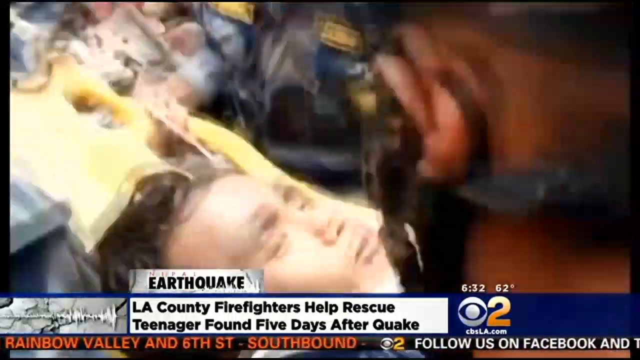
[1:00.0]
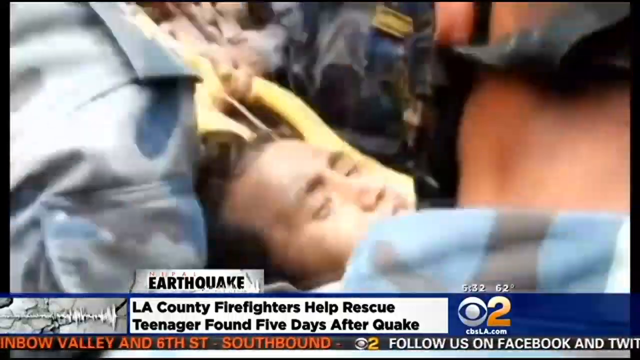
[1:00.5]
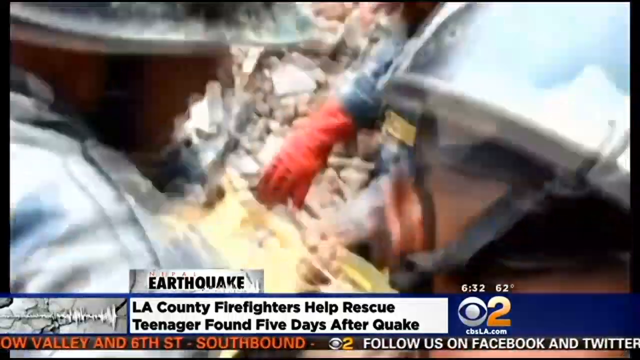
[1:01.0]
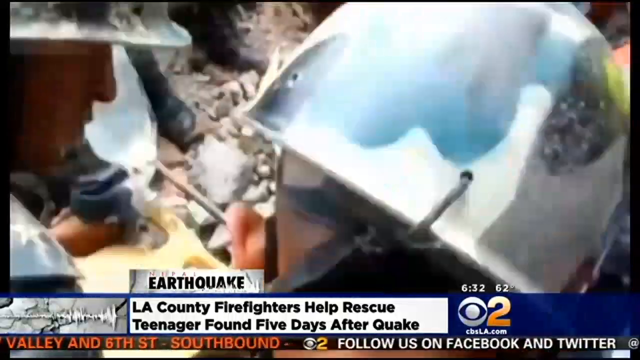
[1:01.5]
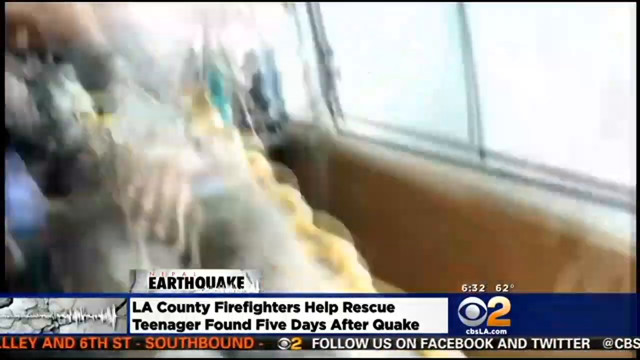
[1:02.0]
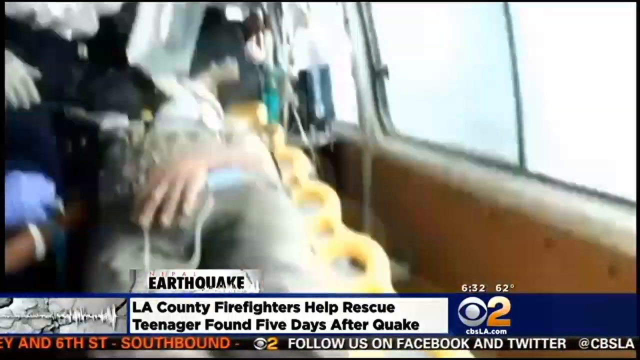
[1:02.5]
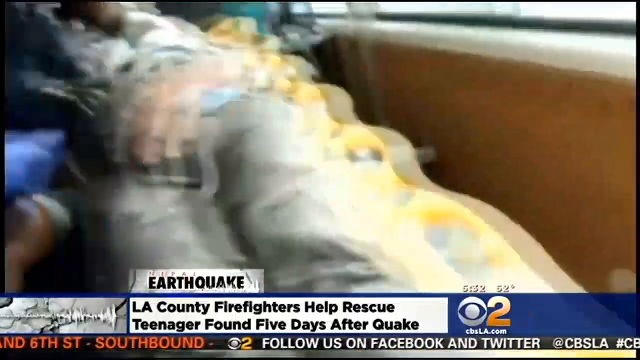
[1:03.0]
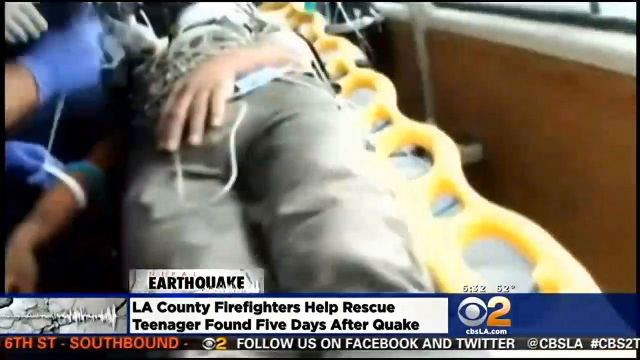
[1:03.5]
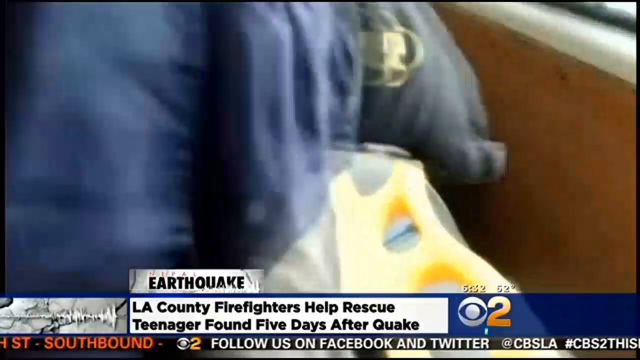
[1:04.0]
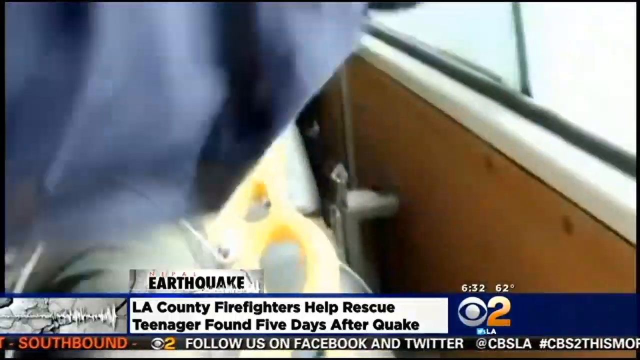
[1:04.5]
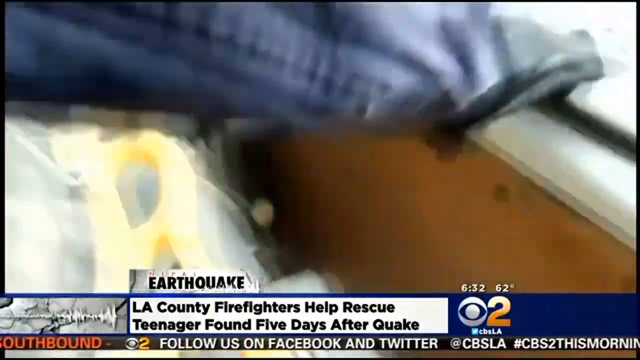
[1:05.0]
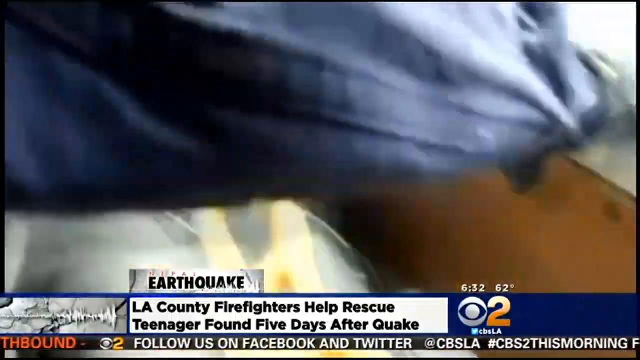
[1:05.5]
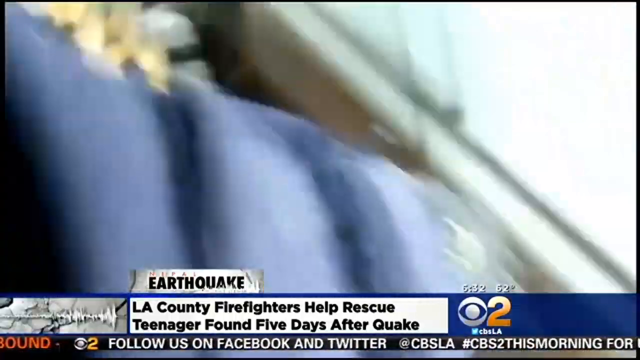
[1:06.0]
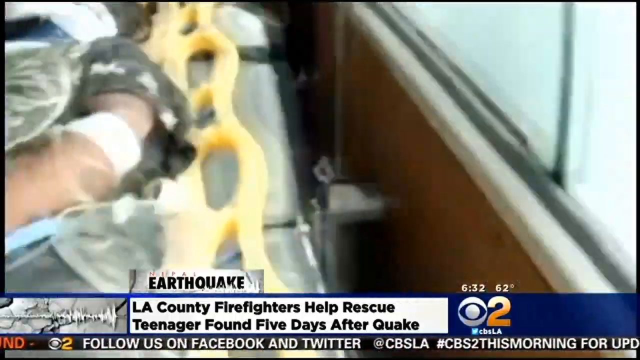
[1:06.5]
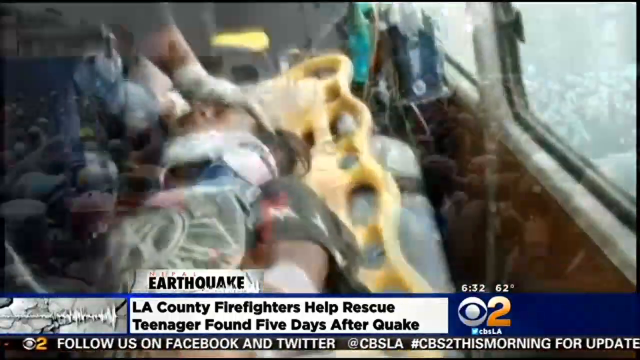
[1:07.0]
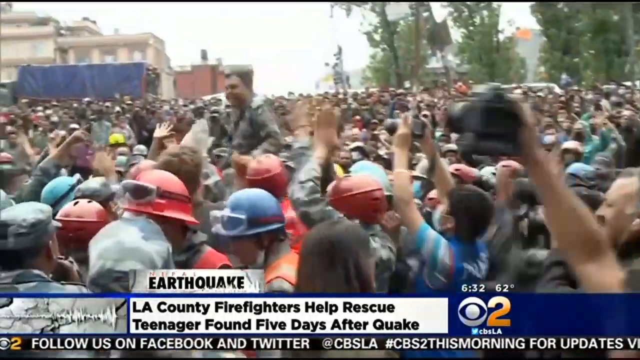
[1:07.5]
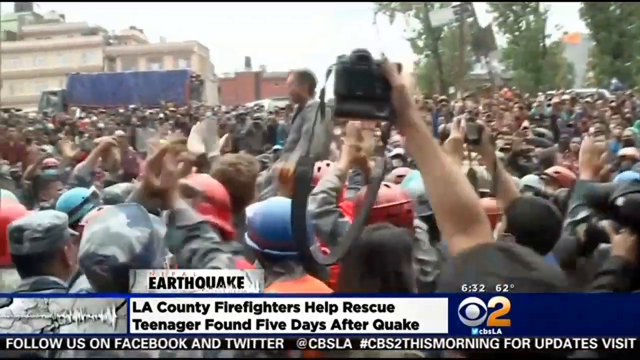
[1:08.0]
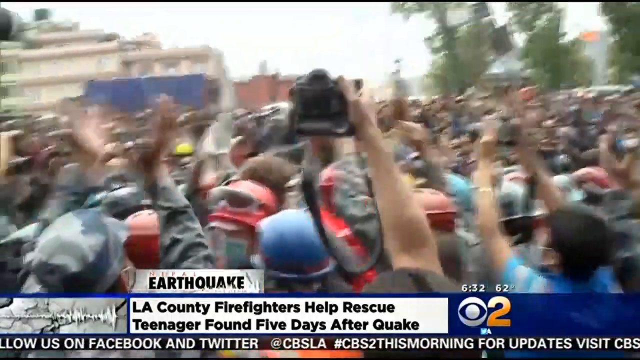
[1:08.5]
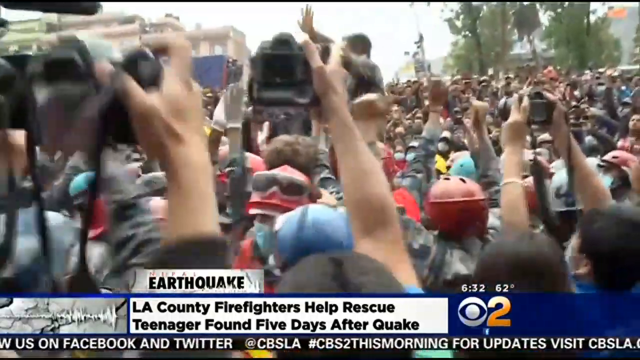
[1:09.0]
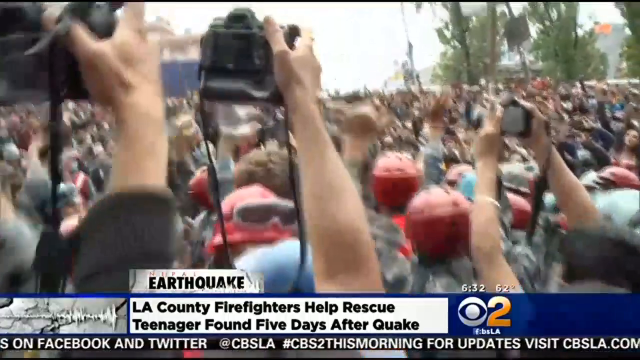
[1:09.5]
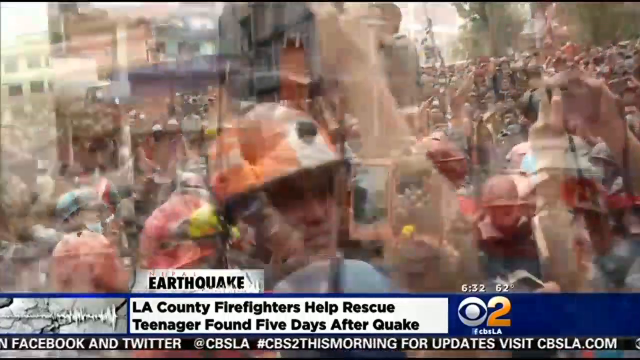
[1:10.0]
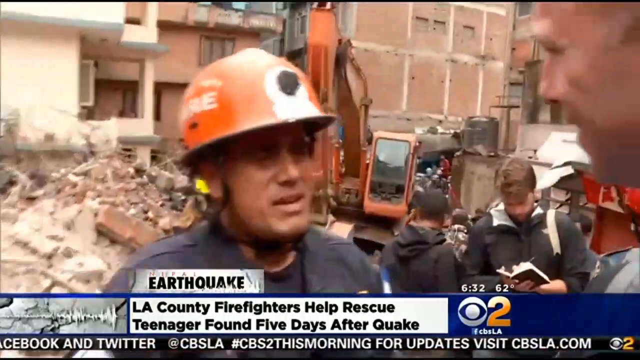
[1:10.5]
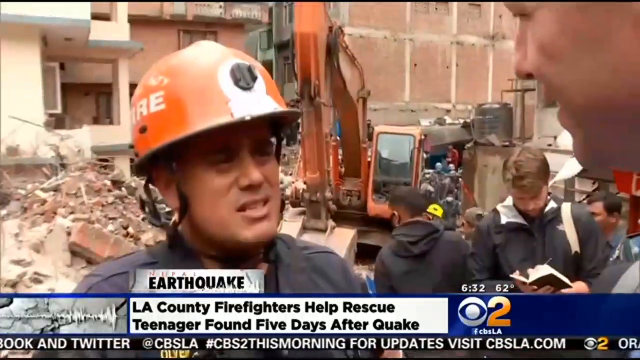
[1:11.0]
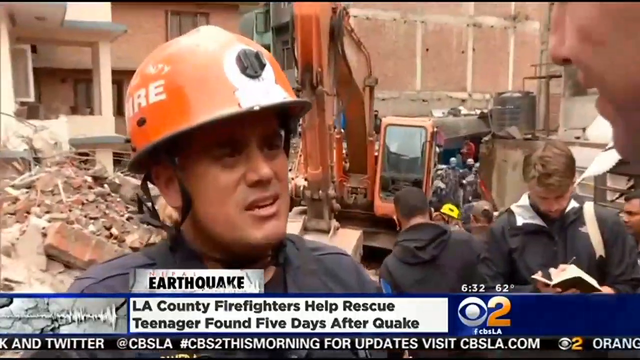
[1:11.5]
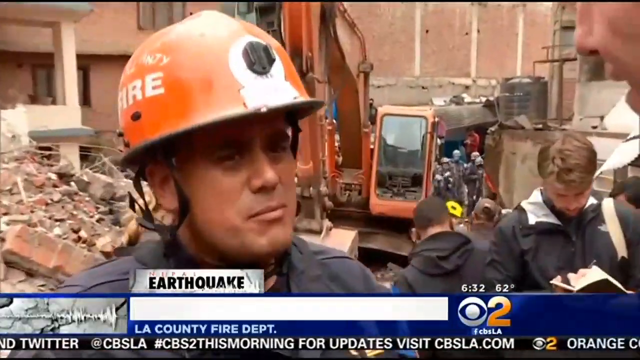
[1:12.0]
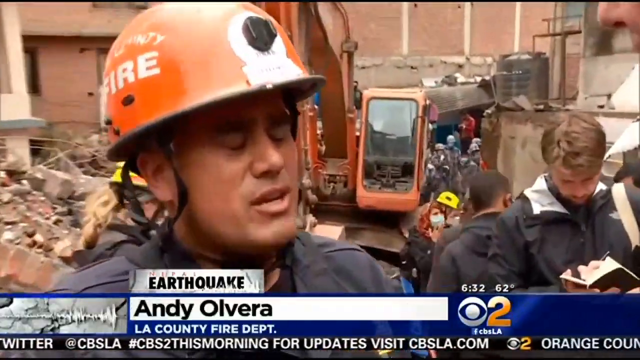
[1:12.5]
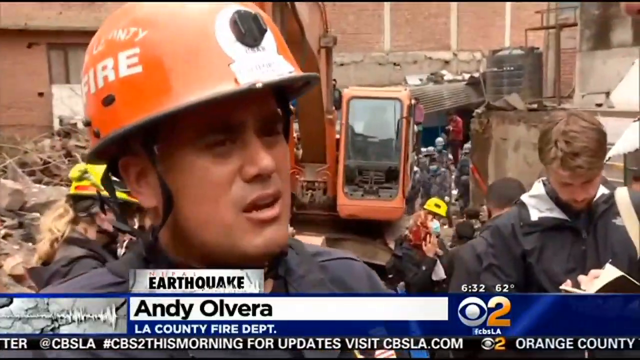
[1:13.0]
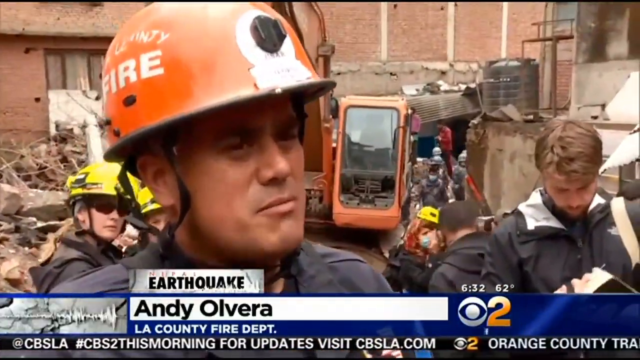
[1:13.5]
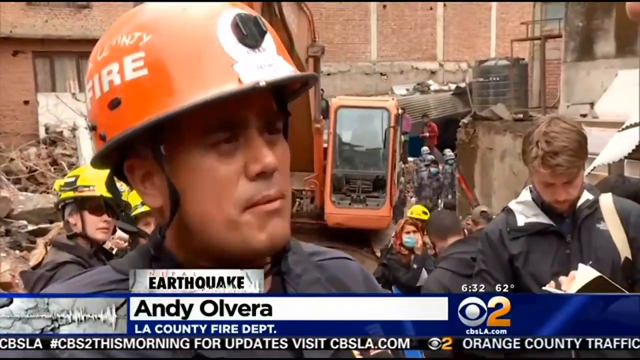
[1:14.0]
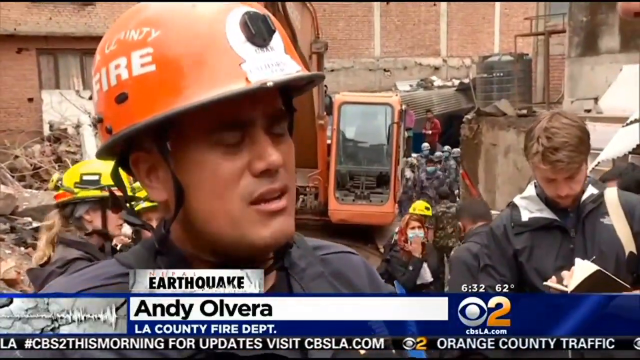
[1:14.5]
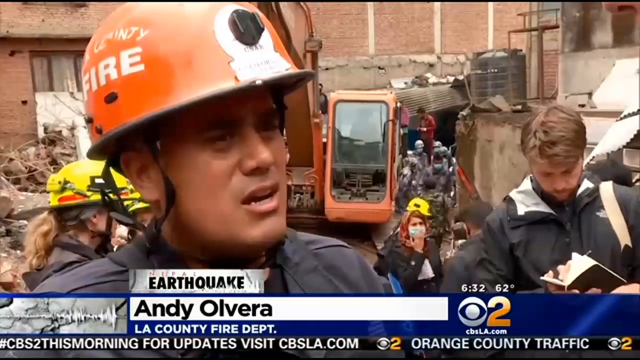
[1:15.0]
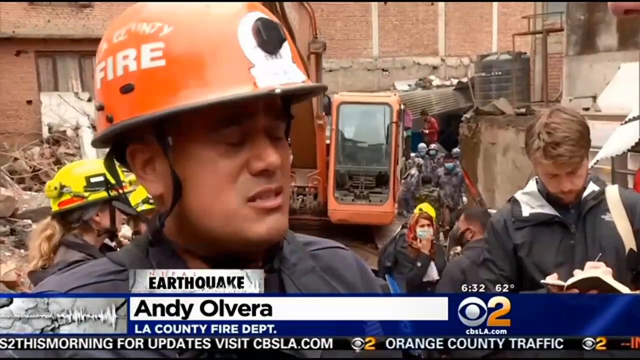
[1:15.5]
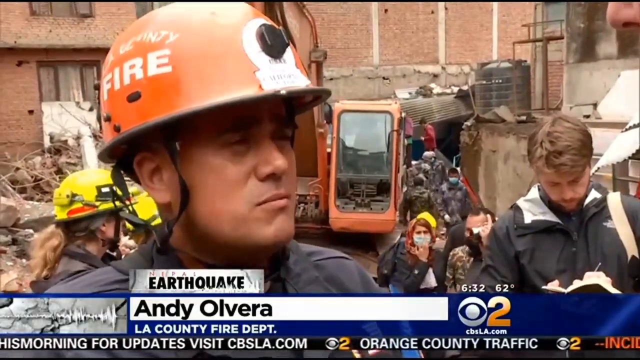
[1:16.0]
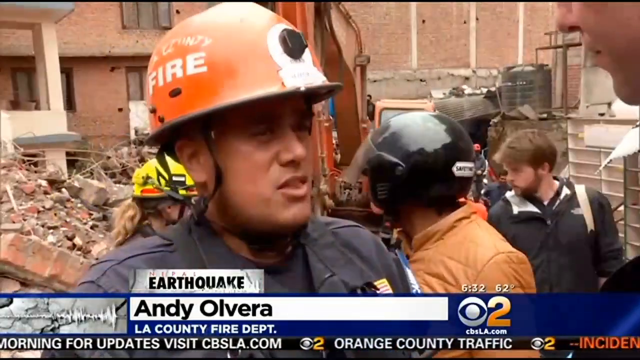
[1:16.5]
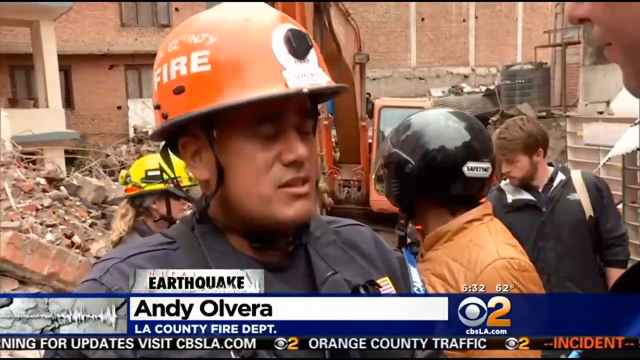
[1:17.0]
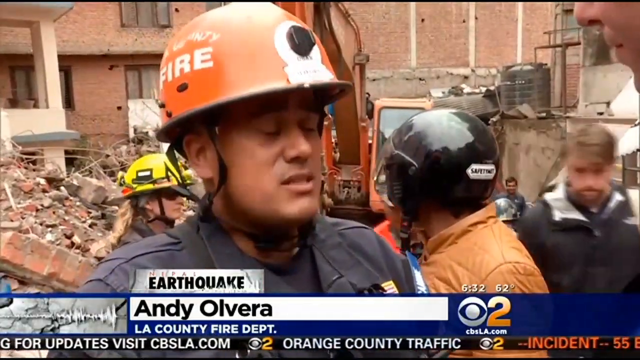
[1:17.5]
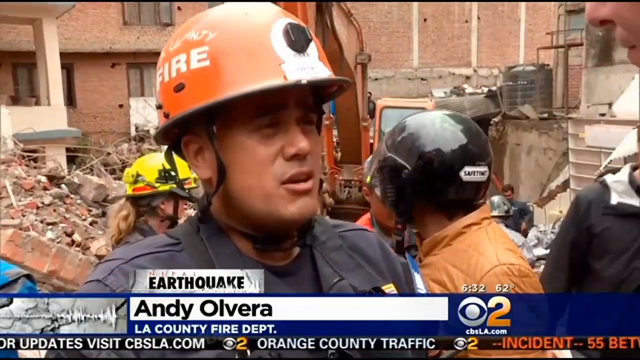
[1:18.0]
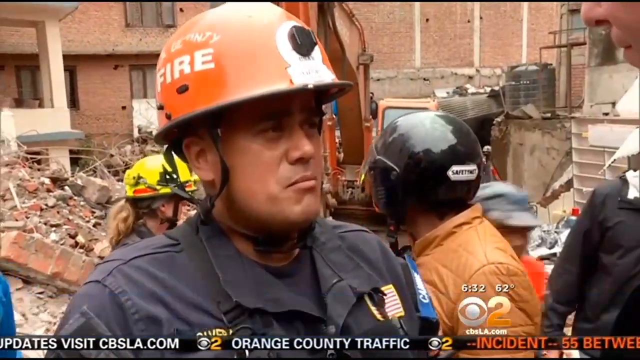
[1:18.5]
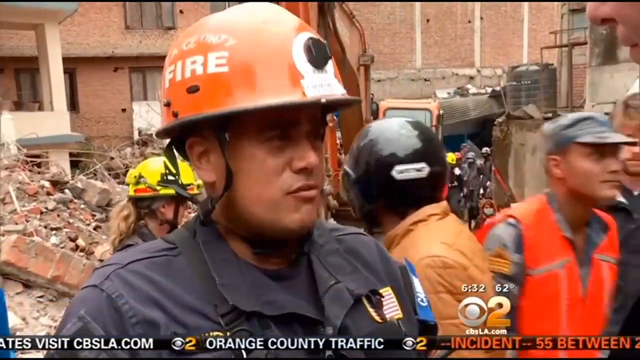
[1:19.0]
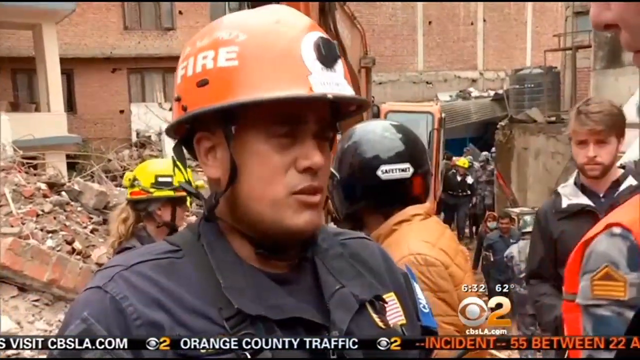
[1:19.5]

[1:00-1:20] A close-up shows a Nepali boy with short black hair on a yellow stretcher. He is being carried by several rescue workers whose faces are not visible; they wear helmets and hard hats. Next, the young boy is stretched out on a stretcher in the back of an ambulance; his face is not visible, only his body. A rescue worker works on him and he becomes obscured. A large crowd of people follows, with one man on the shoulders of another man. Many people in the crowd wear helmets or hard hats, and many hold up cameras, taking pictures. In the next scene, a man in an orange hardhat is interviewed by another man off-camera. Behind him are a bulldozer and several men in hardhats walking back and forth. At the bottom of the screen is the headline "EARTHQUAKE L.A. COUNTY FIREFIGHTERS HELP RESCUE TEENAGER FOUND FIVE DAYS AFTER QUAKE."